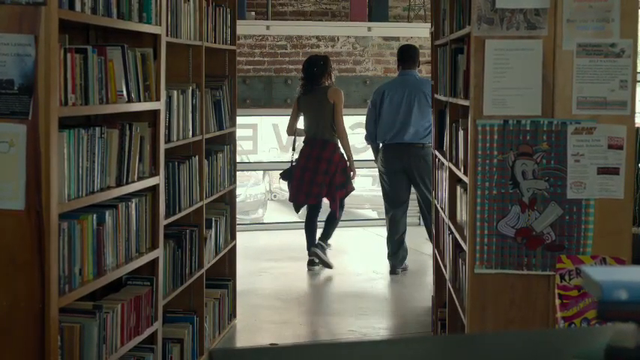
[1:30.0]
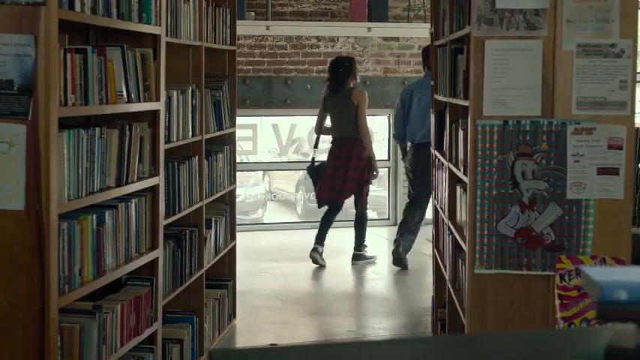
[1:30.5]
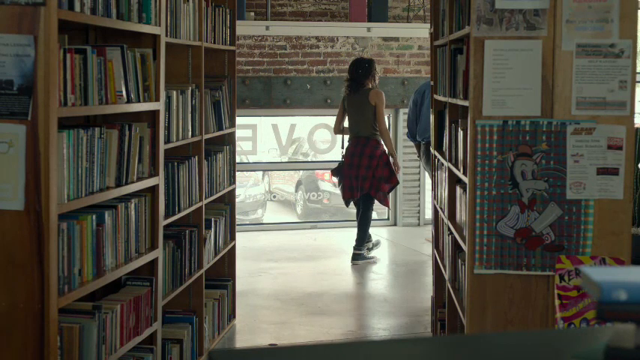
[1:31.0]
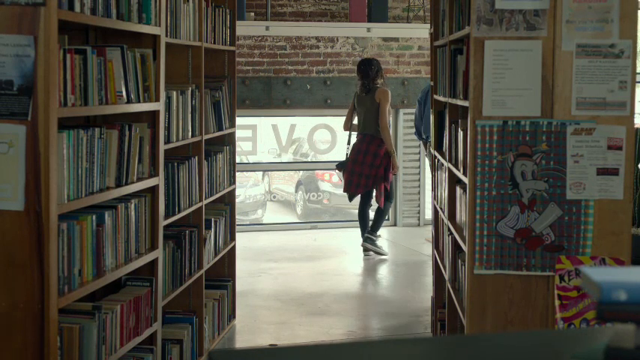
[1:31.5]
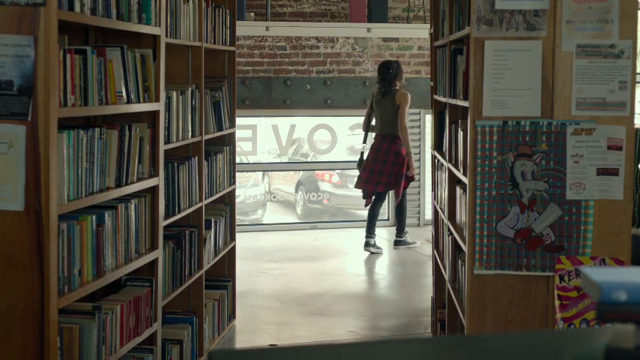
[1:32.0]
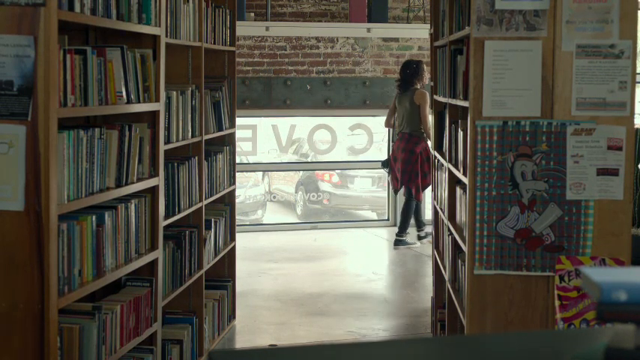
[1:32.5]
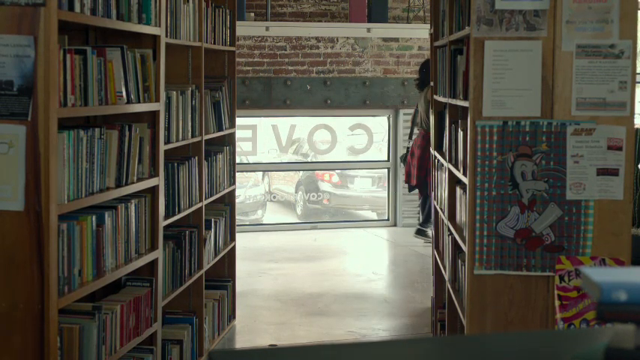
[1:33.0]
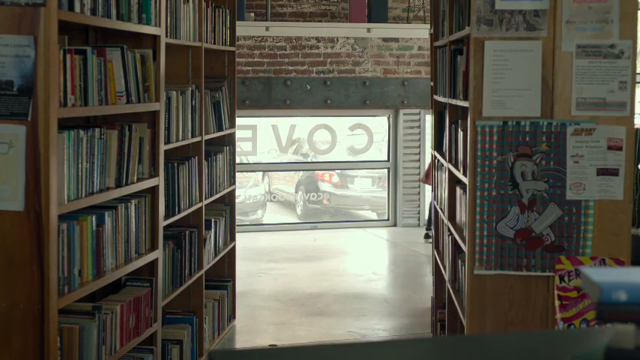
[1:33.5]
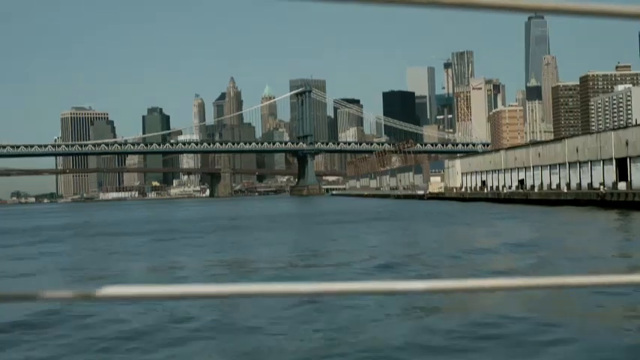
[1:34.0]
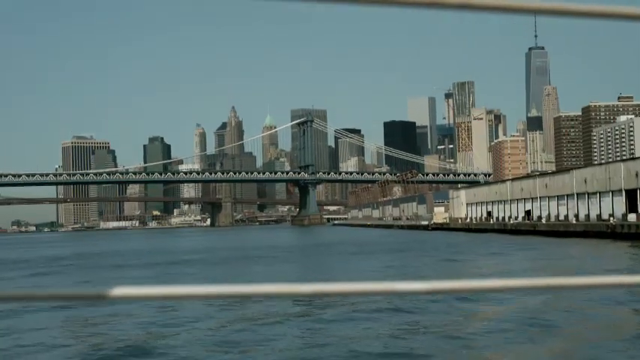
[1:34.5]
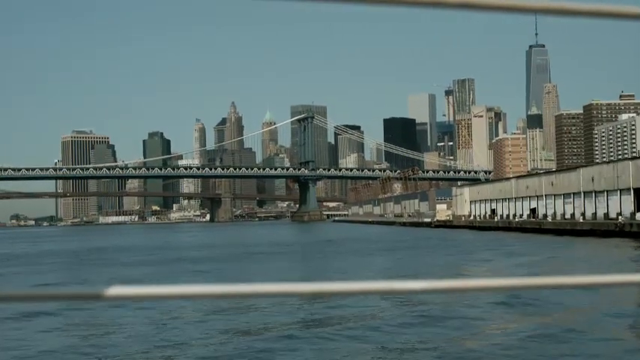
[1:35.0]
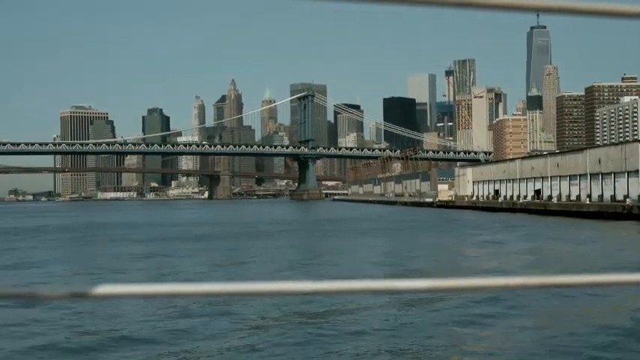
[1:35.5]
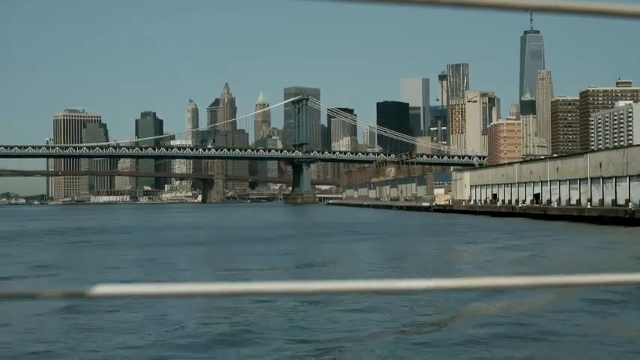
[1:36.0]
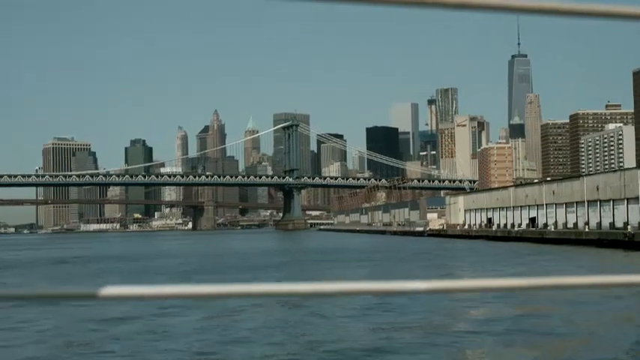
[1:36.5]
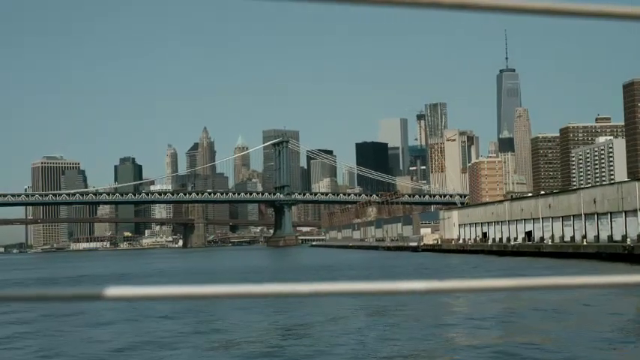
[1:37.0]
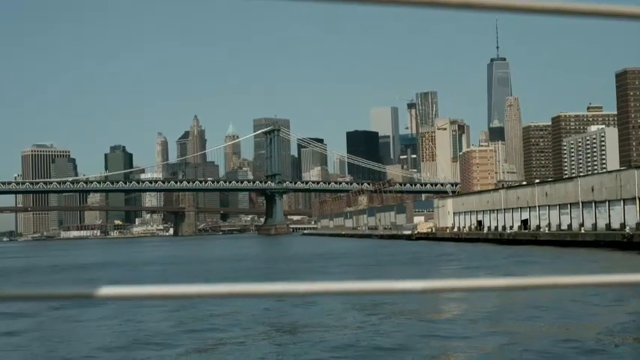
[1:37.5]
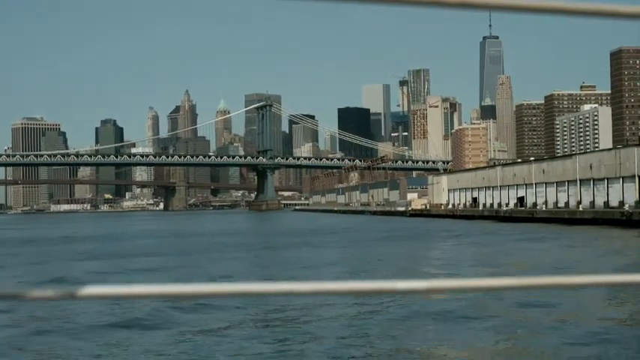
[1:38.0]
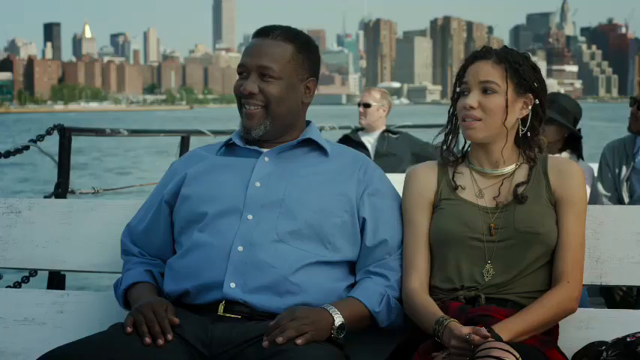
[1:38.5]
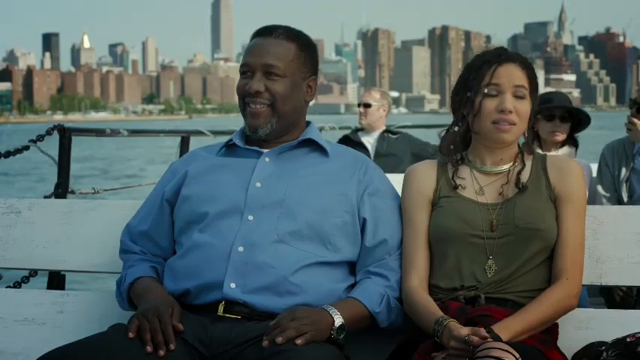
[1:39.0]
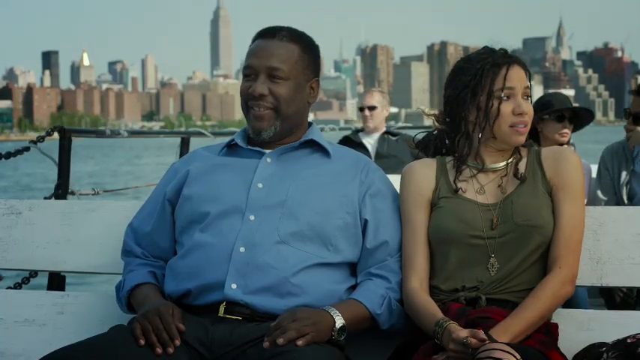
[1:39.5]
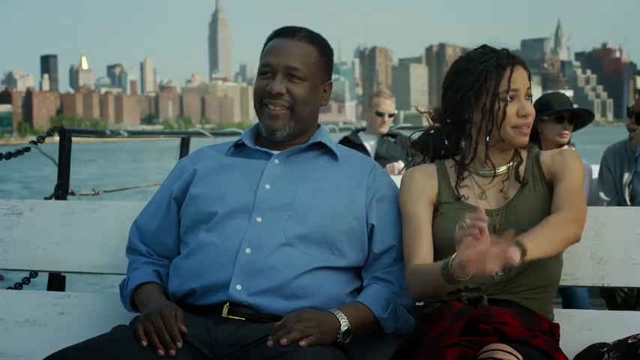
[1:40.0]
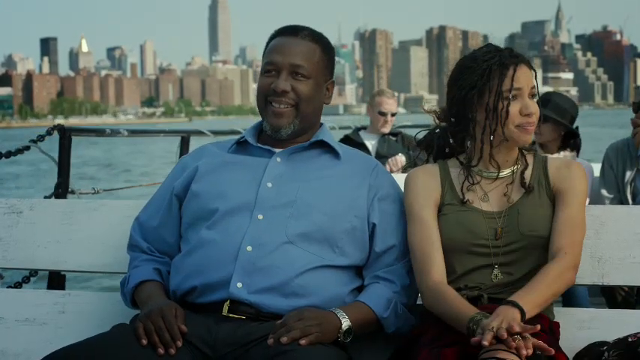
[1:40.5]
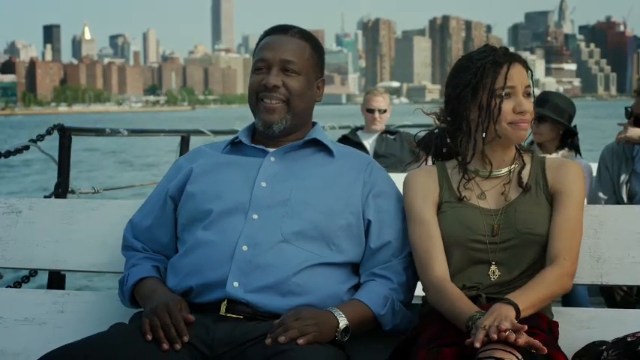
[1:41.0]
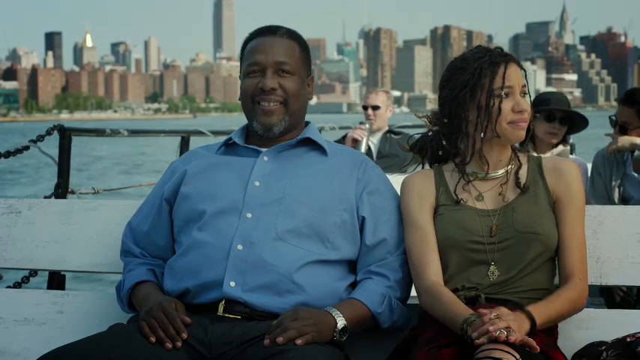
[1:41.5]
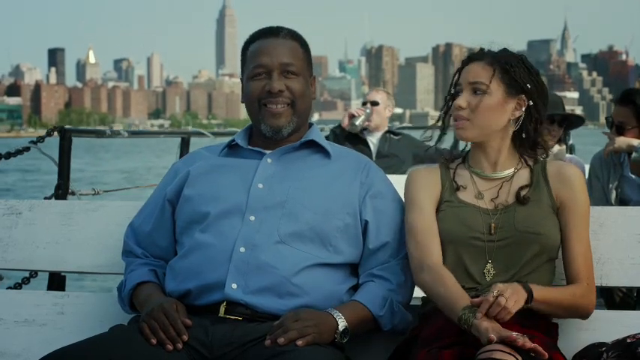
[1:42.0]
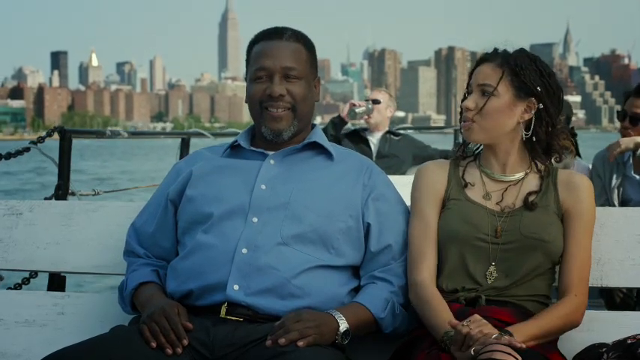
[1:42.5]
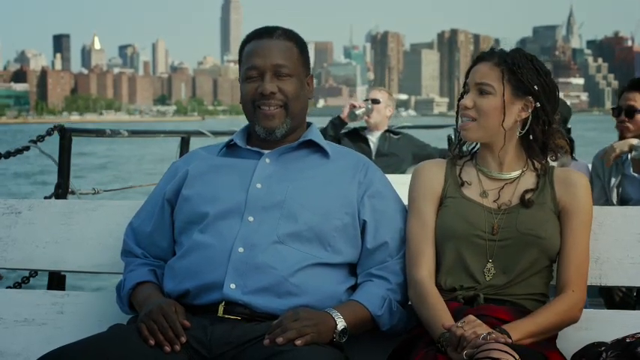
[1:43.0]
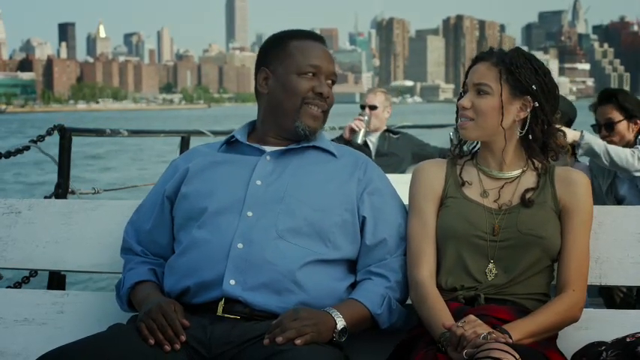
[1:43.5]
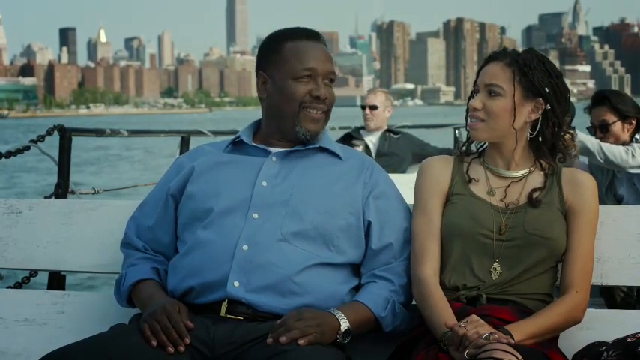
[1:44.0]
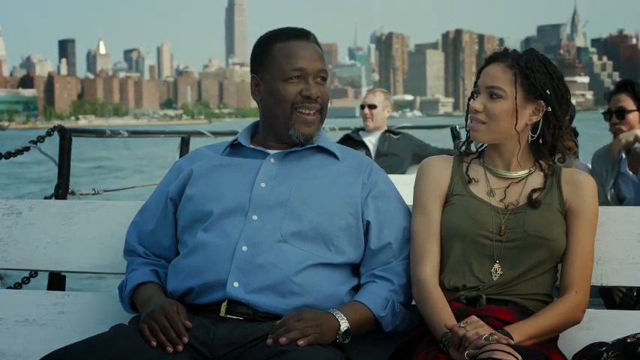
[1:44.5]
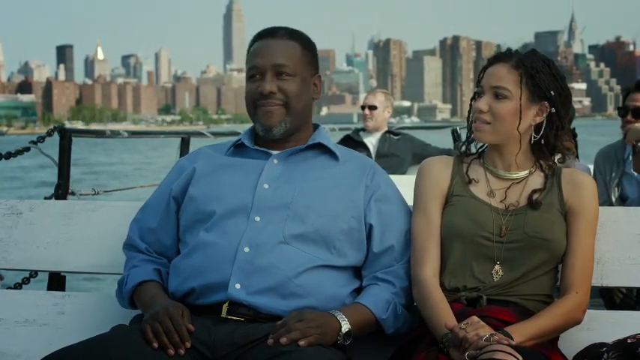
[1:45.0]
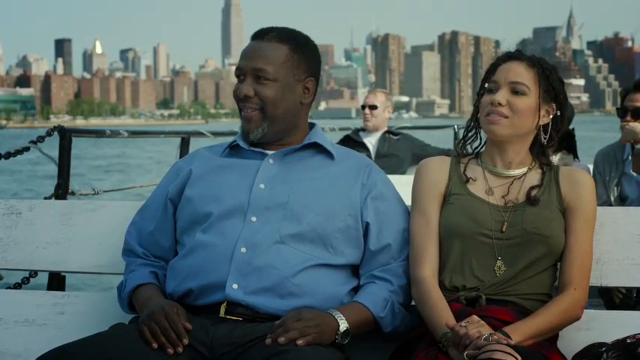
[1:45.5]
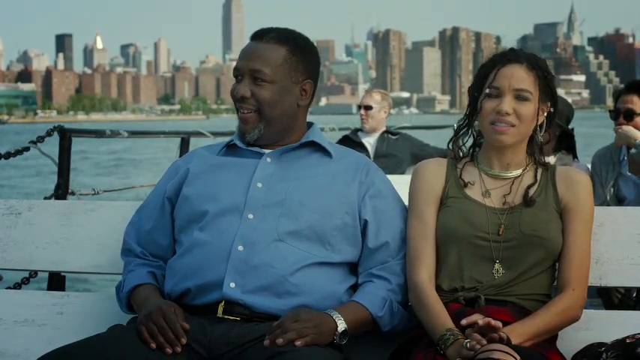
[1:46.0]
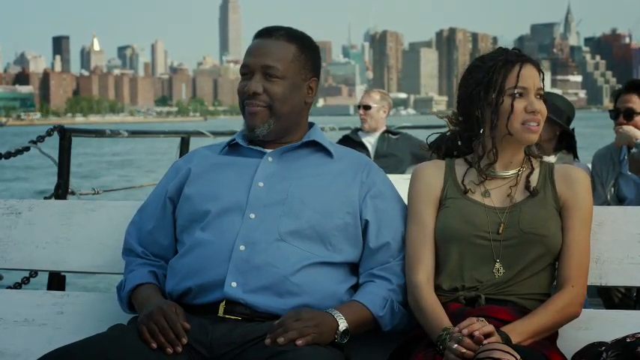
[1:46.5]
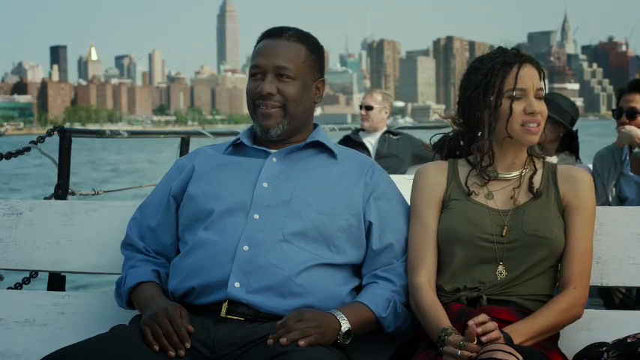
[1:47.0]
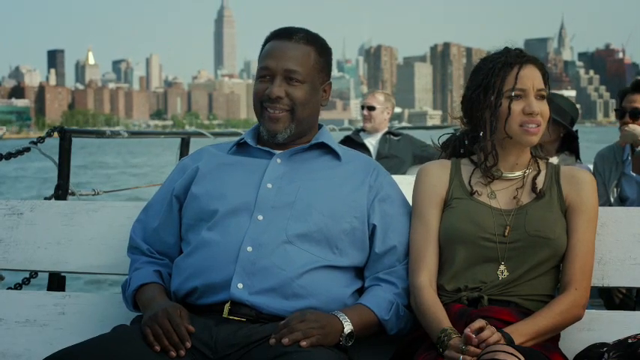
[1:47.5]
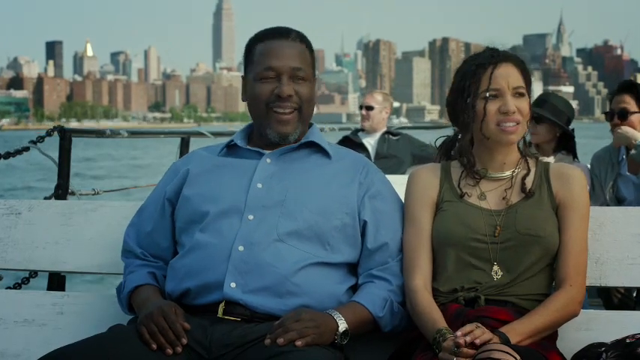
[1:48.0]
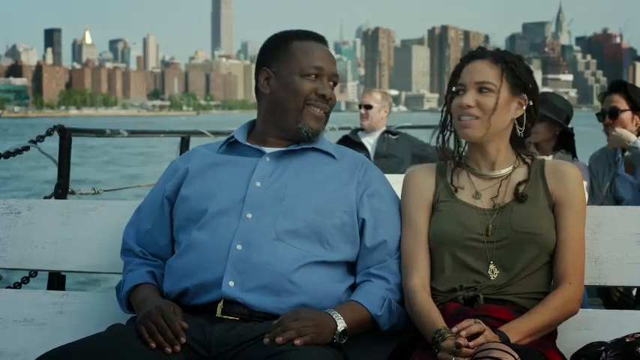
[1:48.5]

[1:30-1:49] Bookshelves stand on the left and right, so many rows high that the setting might be a library, and their tops cannot be seen. Two people at the end of the bookshelves walk to the right: a middle-aged Black man in a light blue dress shirt and dark pants, and a very young Black woman, maybe 18 to 22, in a green tank top. They are not even near the top of the bookshelves, which are very high. They walk off to the right, and the scene changes to a bay or harbor, with a horizontal bridge in the distance right in the middle and a city on the right, possibly New York. Another scene shows the two people from the front, sitting side by side facing the camera, the woman on the right and the man on the left, seen from the torso up; they appear to be on some sort of boat.